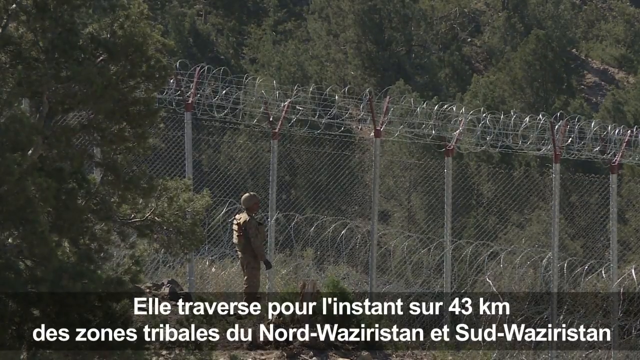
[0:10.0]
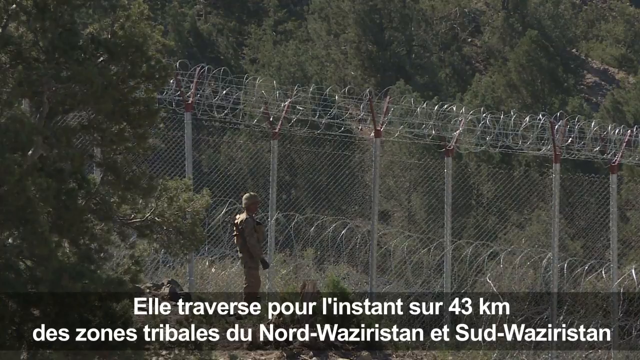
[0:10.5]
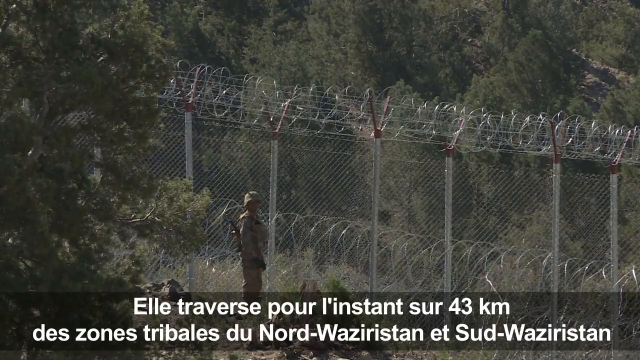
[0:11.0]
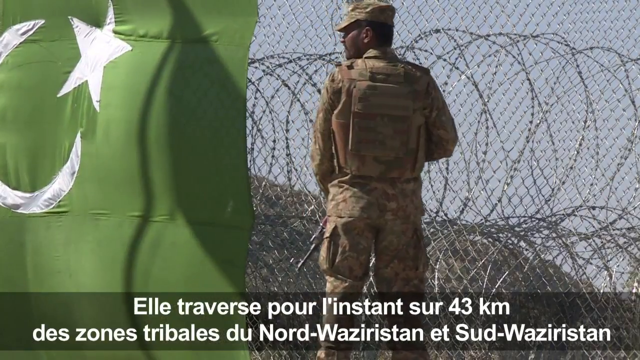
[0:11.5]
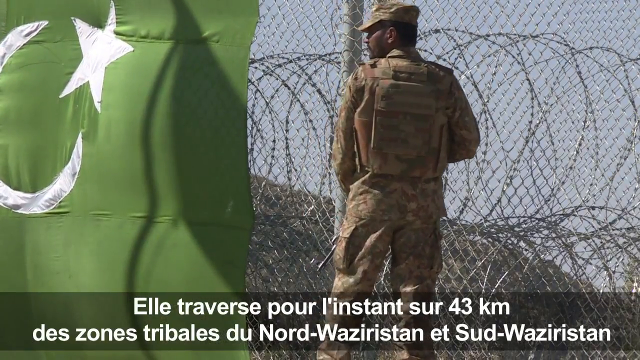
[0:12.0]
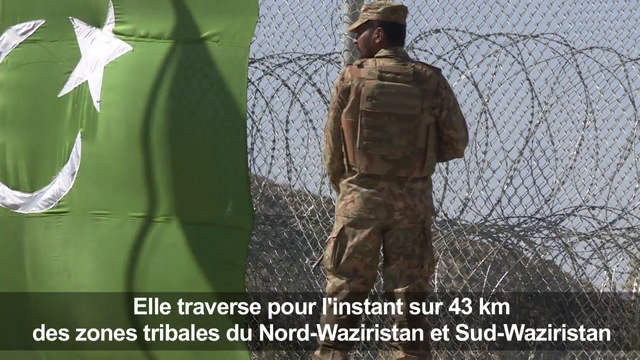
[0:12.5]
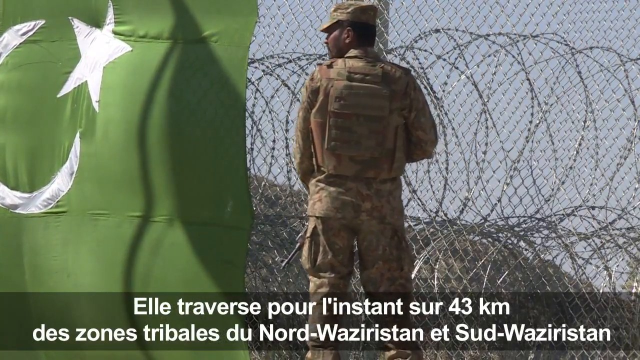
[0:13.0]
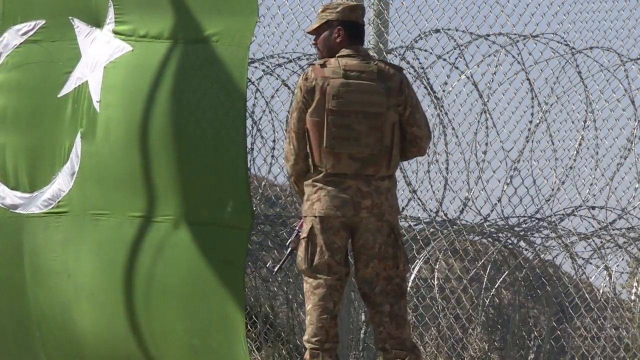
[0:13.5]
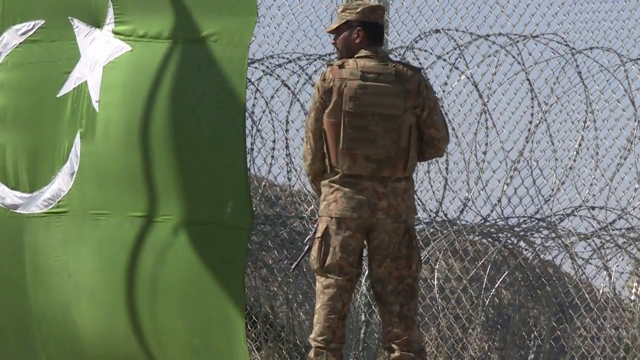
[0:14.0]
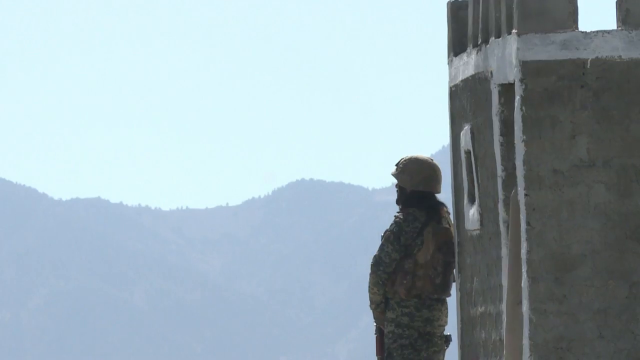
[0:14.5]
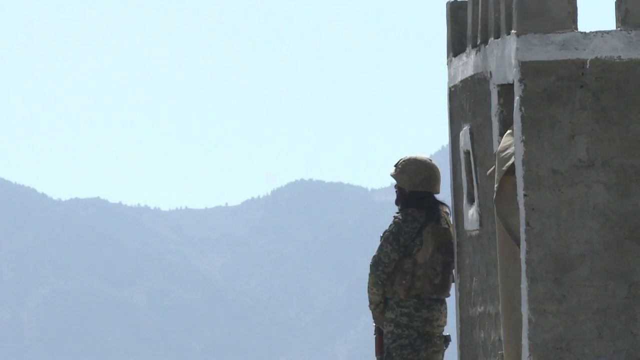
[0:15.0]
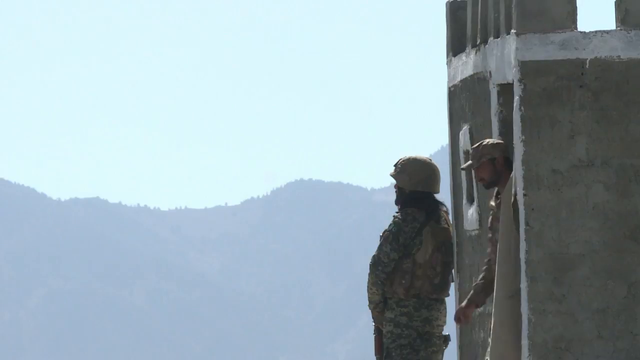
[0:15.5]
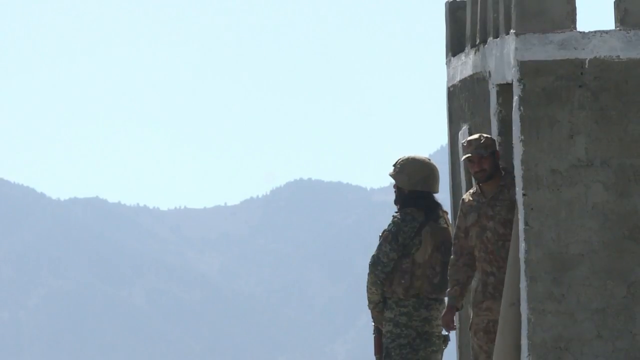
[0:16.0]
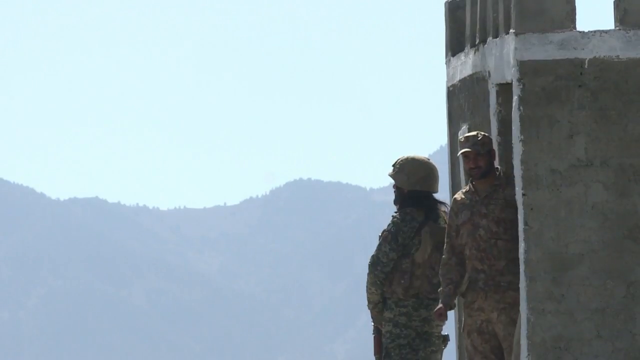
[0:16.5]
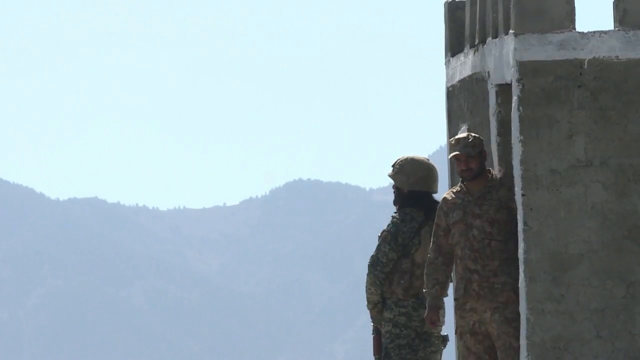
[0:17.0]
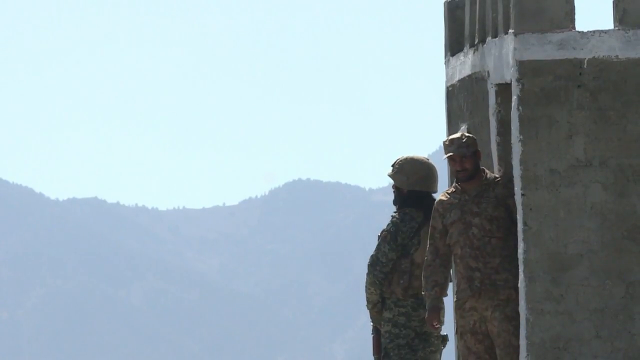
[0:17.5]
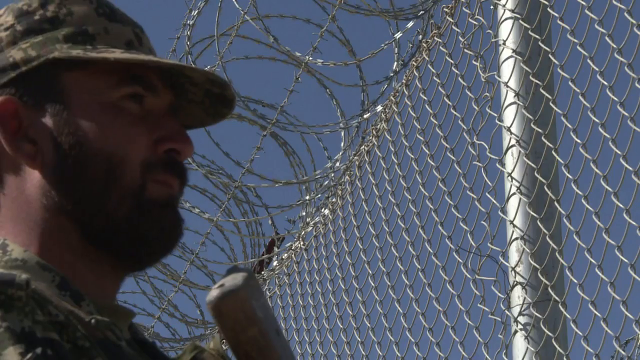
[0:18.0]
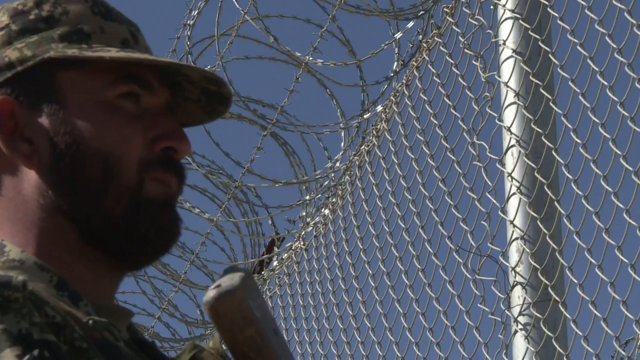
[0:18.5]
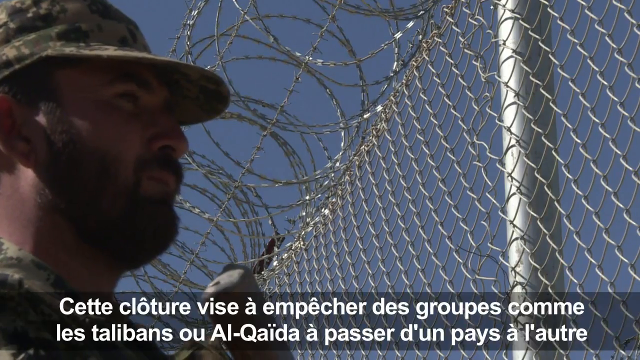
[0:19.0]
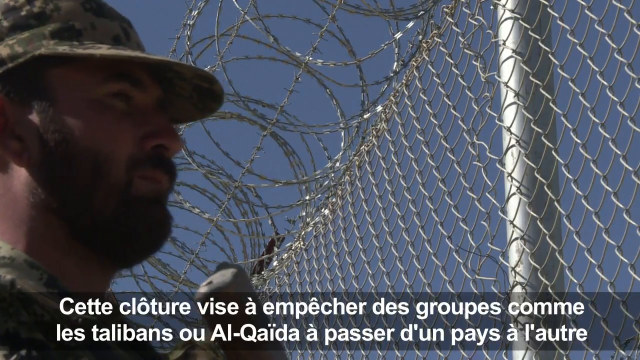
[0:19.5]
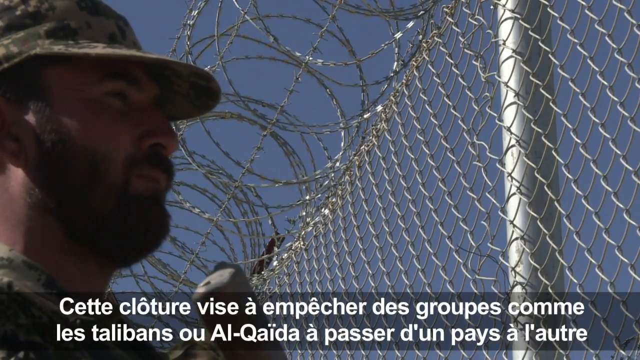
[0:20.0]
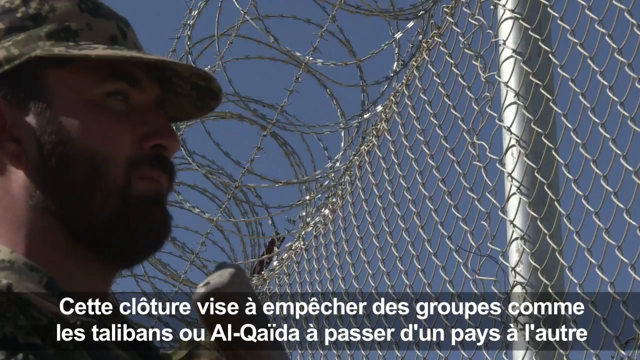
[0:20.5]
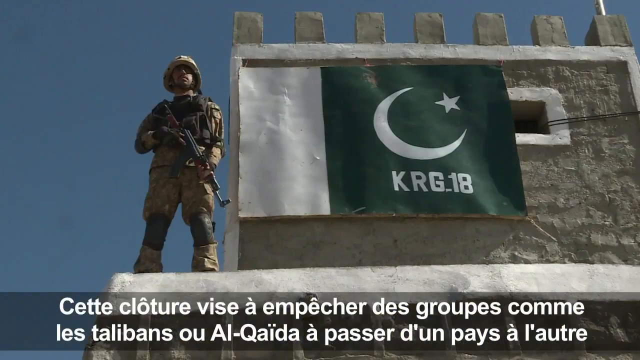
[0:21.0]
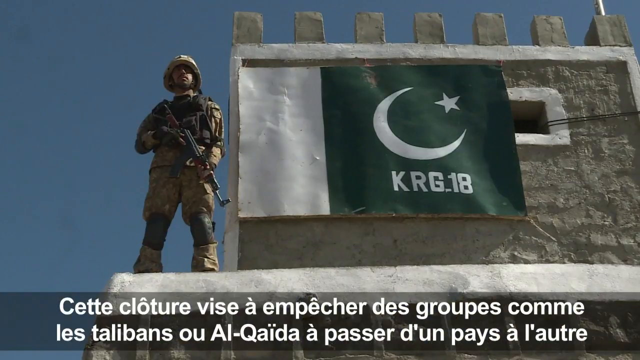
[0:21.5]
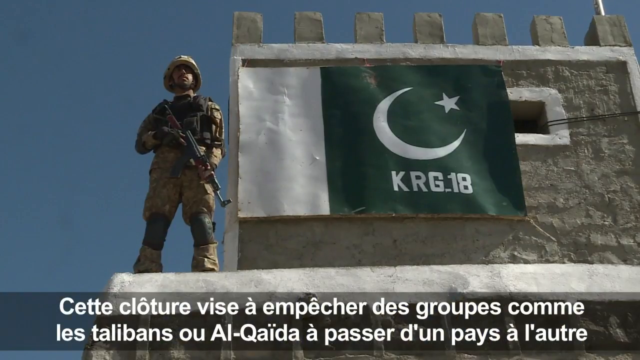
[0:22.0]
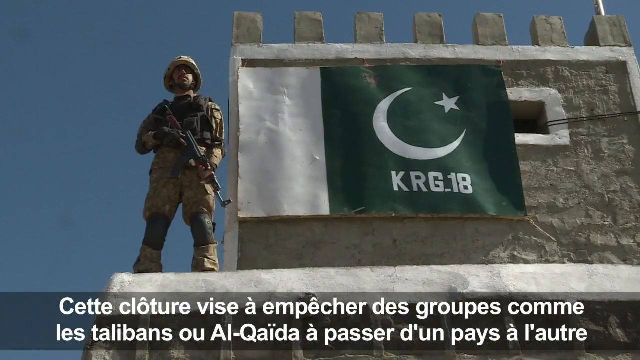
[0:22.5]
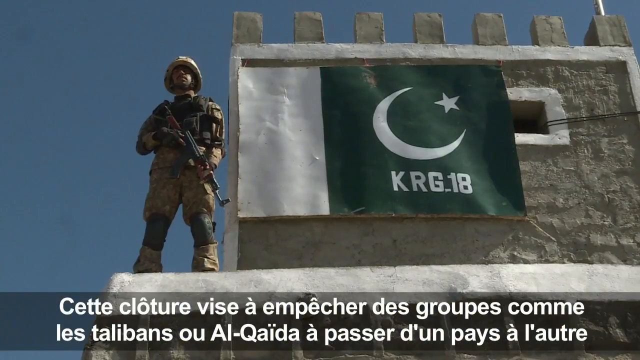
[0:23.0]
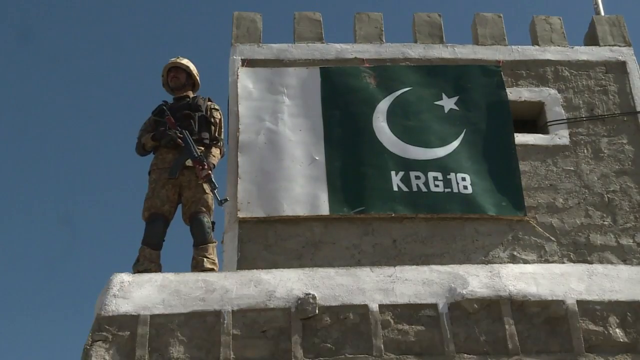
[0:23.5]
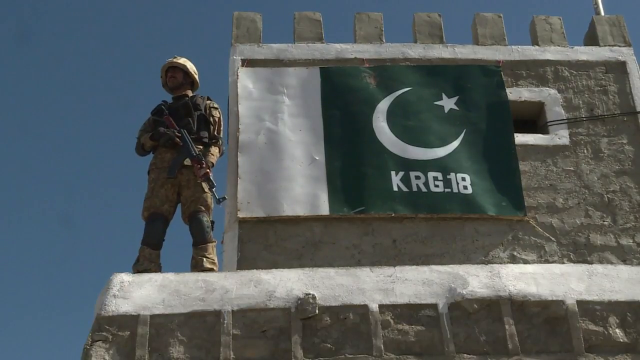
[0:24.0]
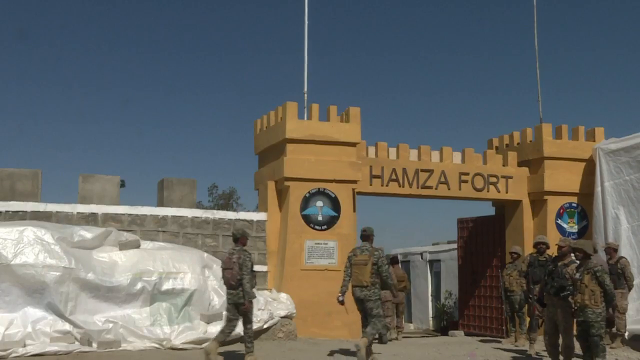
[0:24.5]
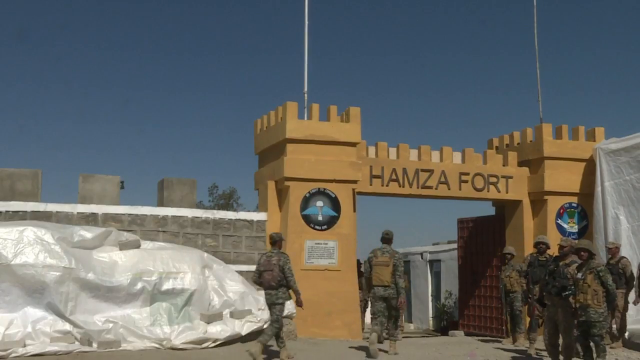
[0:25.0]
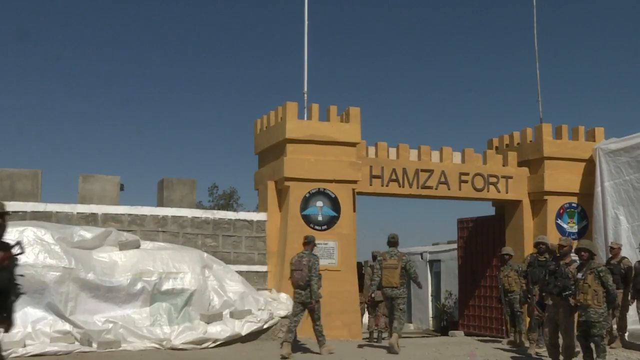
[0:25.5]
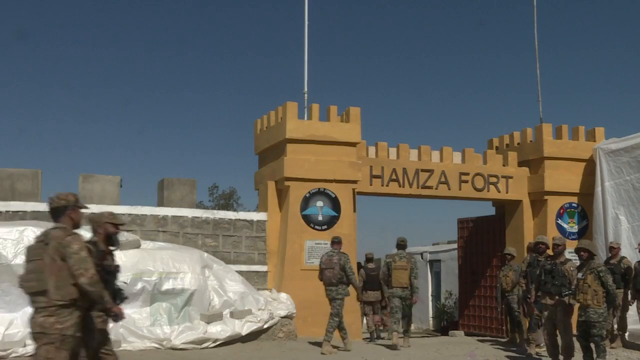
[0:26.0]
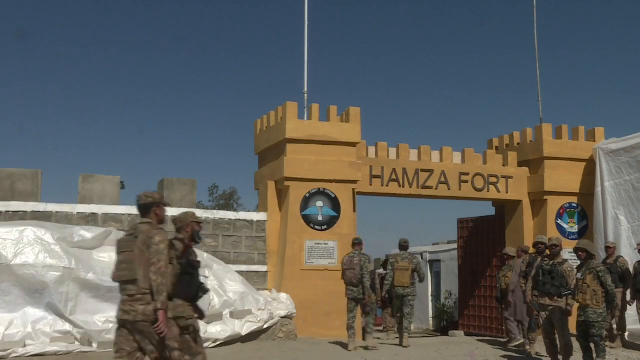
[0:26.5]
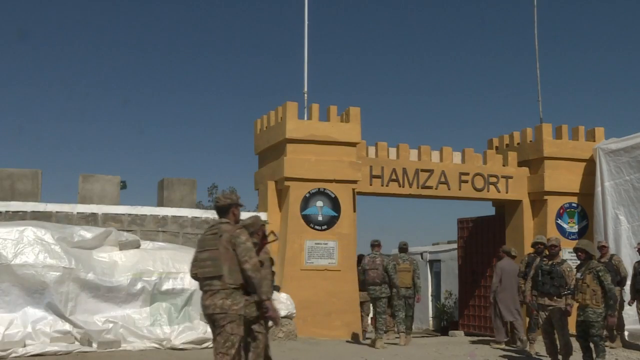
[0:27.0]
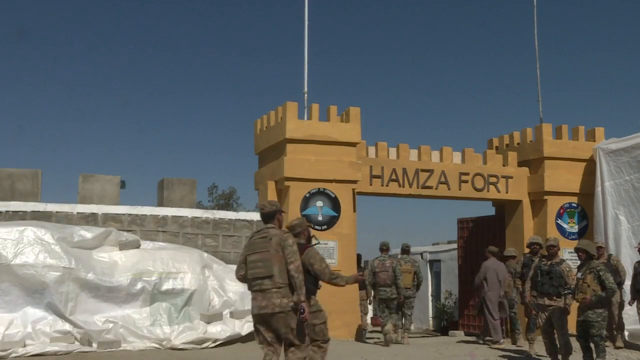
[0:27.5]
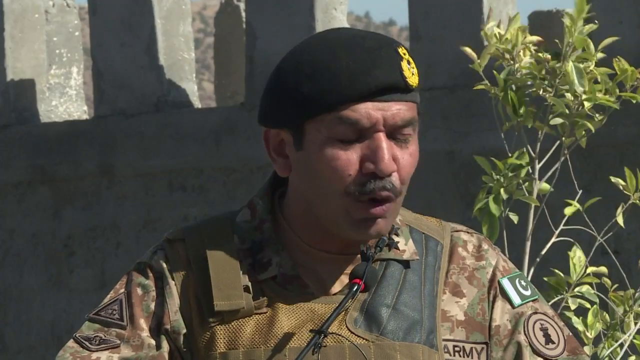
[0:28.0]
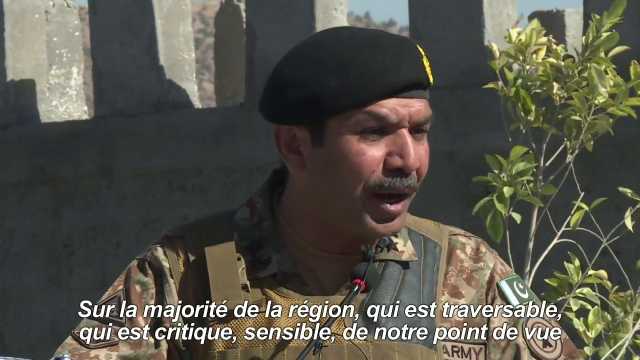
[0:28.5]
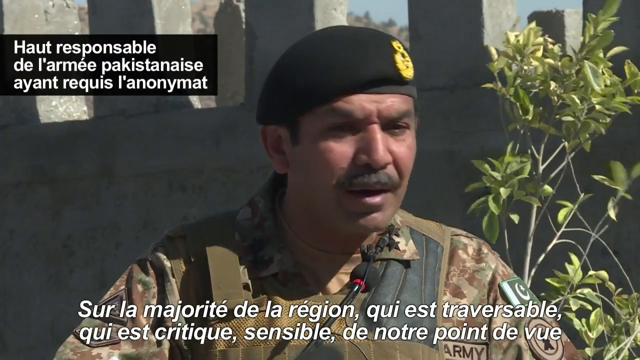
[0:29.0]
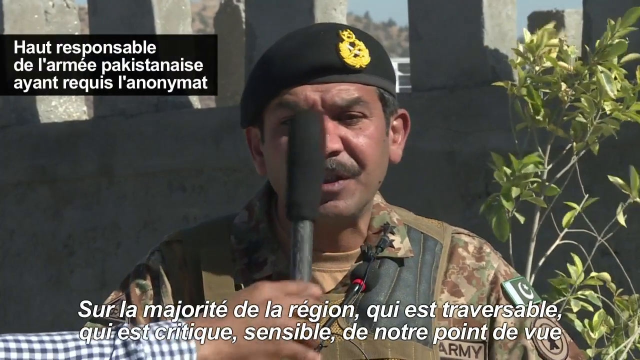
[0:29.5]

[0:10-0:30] The fence is very big and topped with barbed wire. The word "Hamsa" is written on something, possibly marking a soldiers' camp. The soldiers look serious, and their faces do not look happy. A green flag is visible, possibly a Pakistani flag. The place appears to be built in the forest, so the houses cannot be seen; only the trees and the movement of the soldiers are visible. A journalist appears to be interviewing a man who is a soldier. Soldiers are moving up and down.